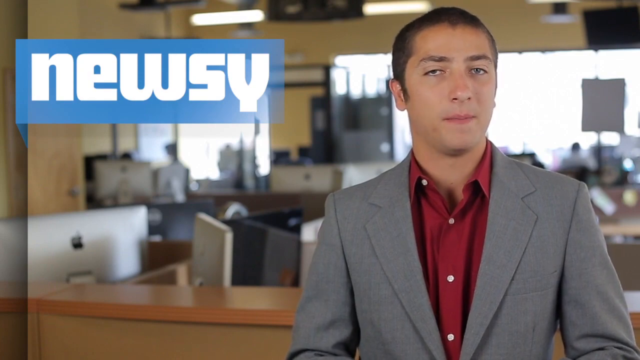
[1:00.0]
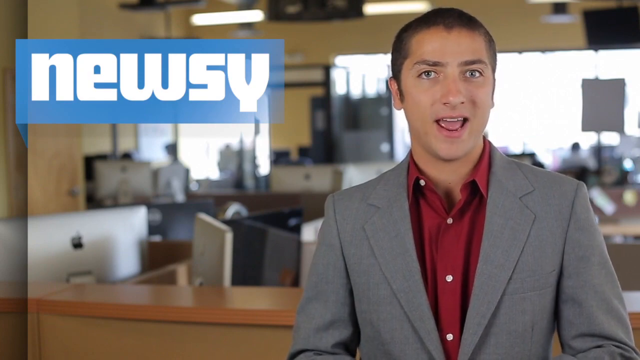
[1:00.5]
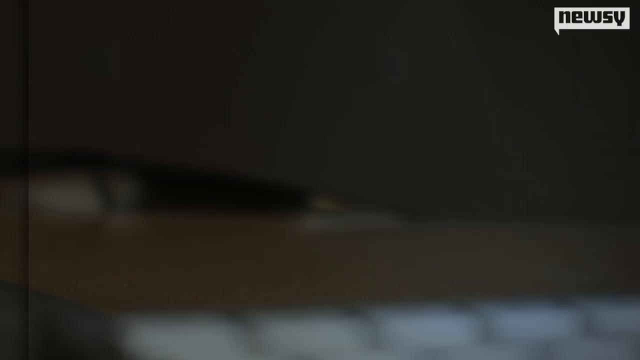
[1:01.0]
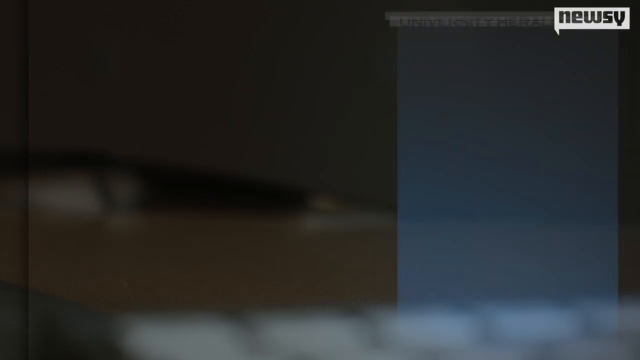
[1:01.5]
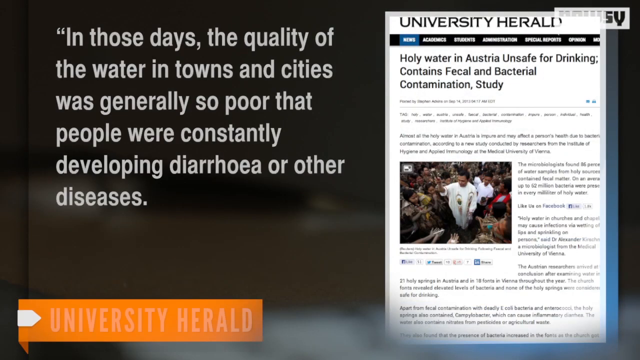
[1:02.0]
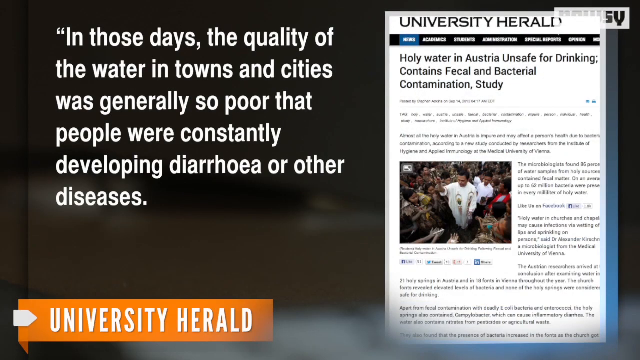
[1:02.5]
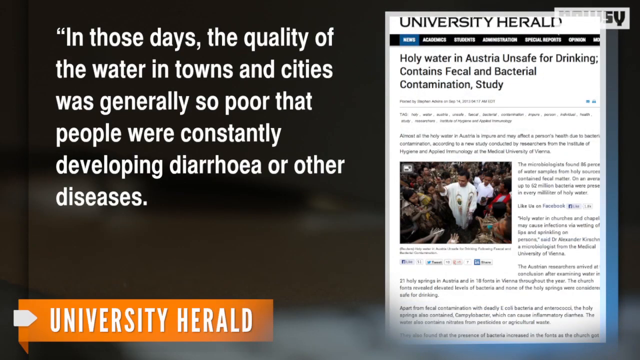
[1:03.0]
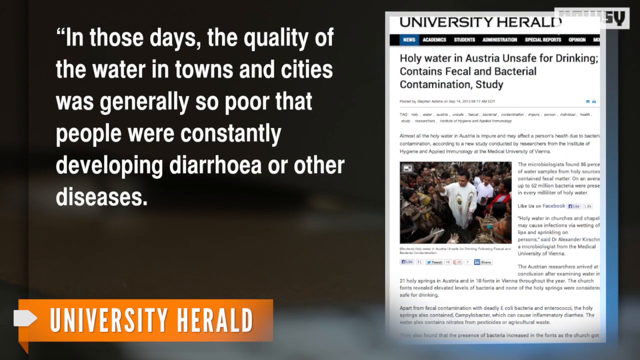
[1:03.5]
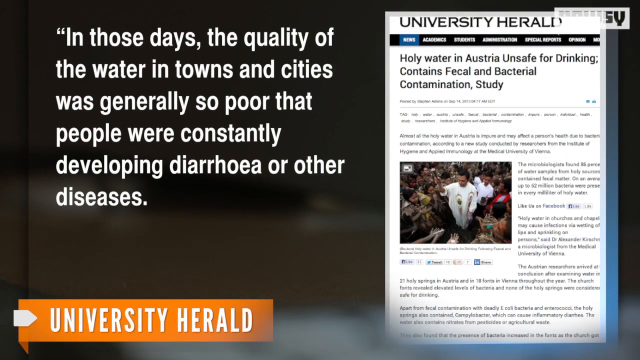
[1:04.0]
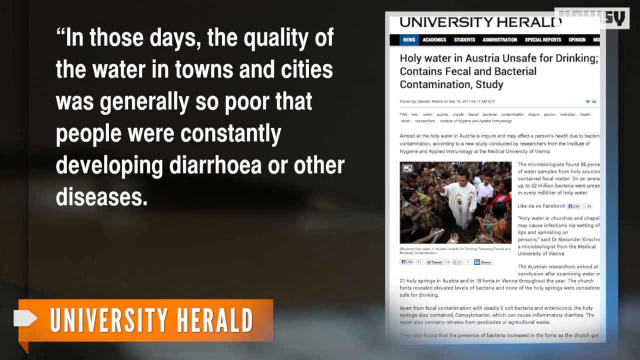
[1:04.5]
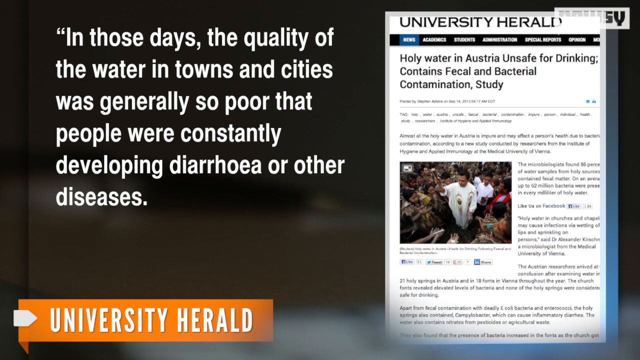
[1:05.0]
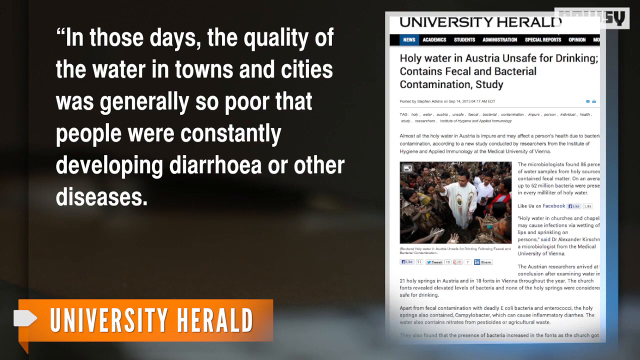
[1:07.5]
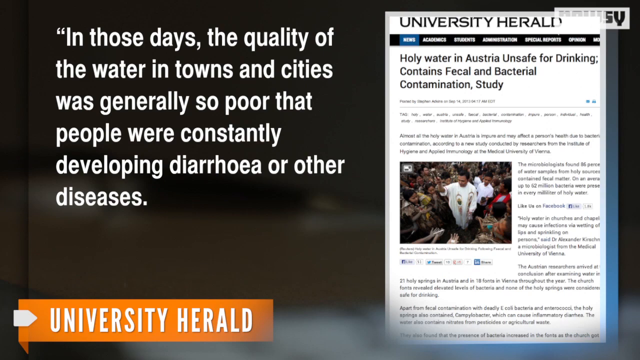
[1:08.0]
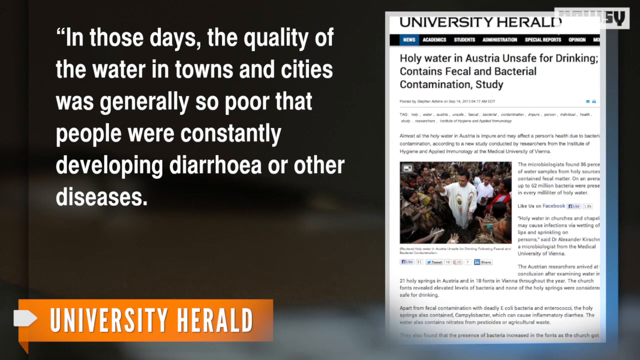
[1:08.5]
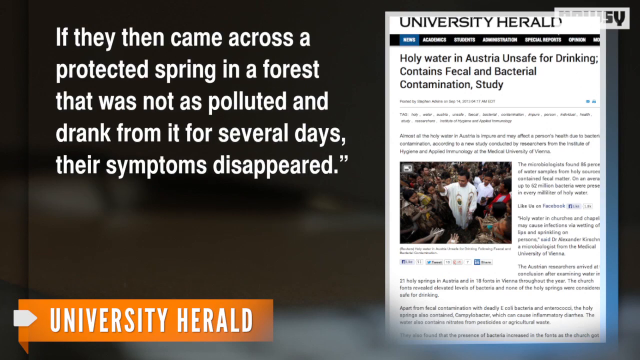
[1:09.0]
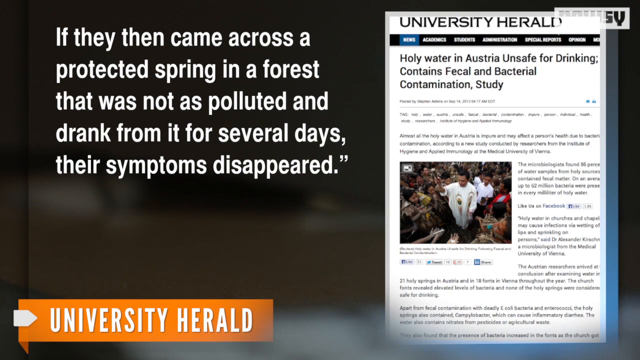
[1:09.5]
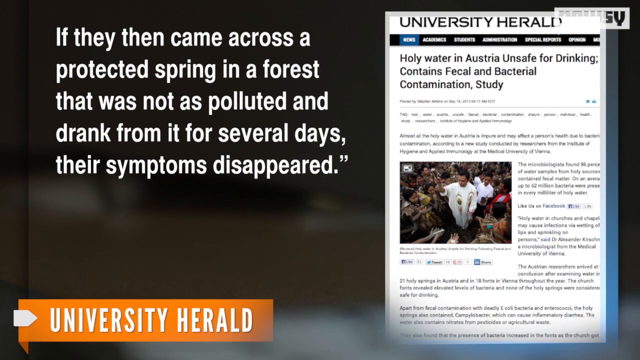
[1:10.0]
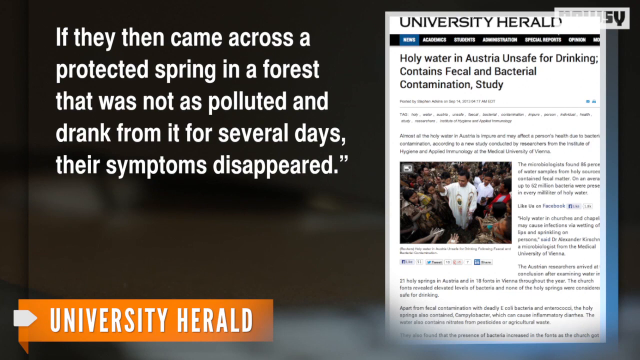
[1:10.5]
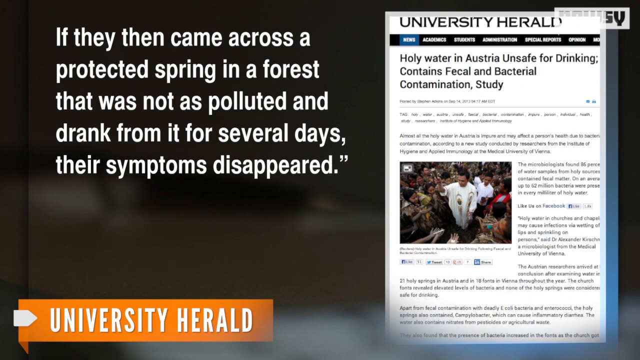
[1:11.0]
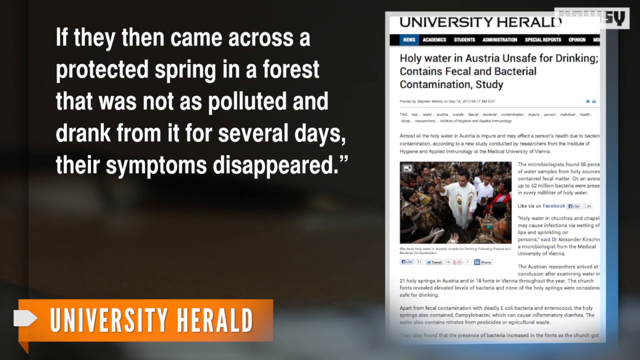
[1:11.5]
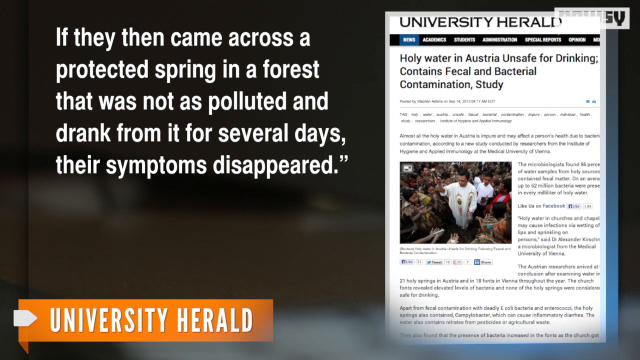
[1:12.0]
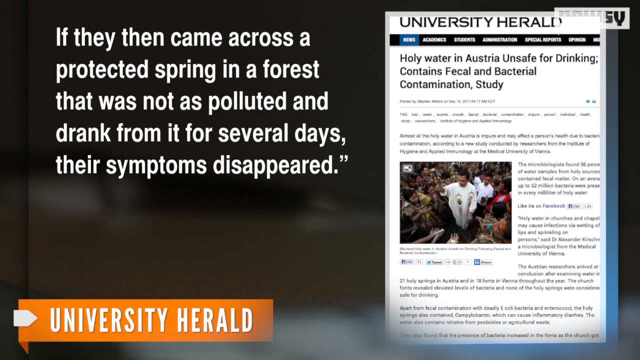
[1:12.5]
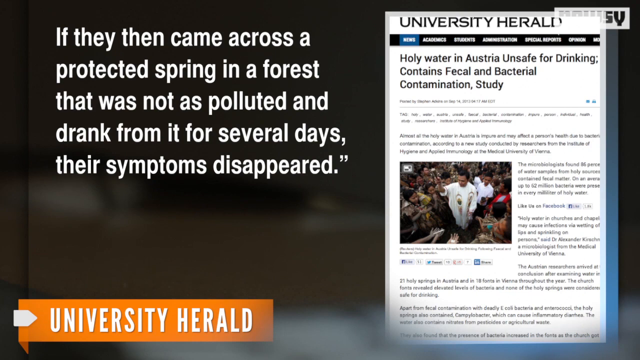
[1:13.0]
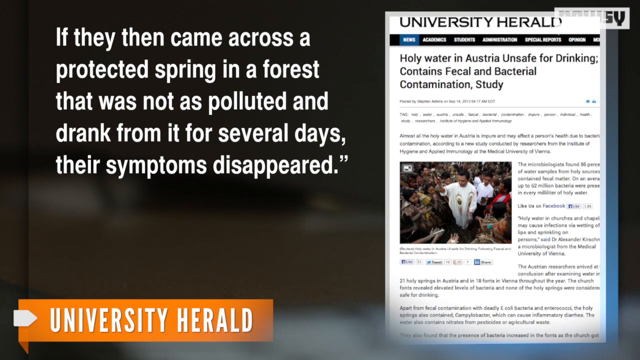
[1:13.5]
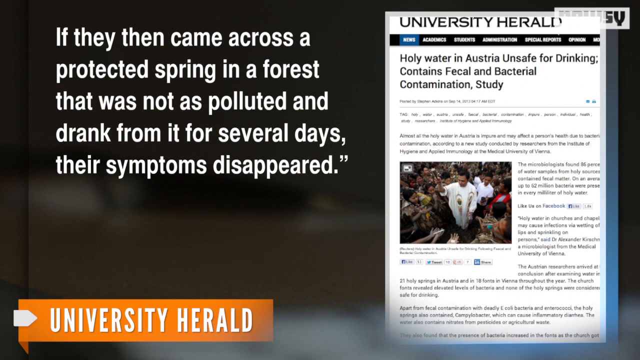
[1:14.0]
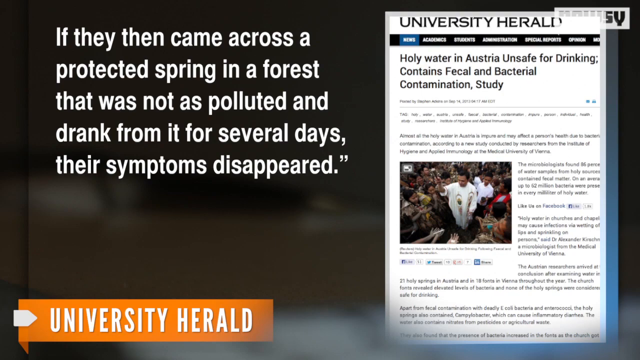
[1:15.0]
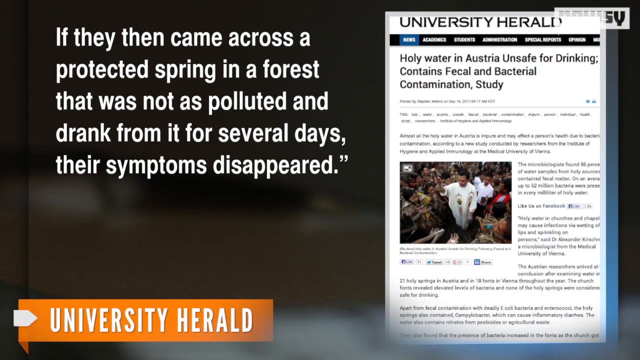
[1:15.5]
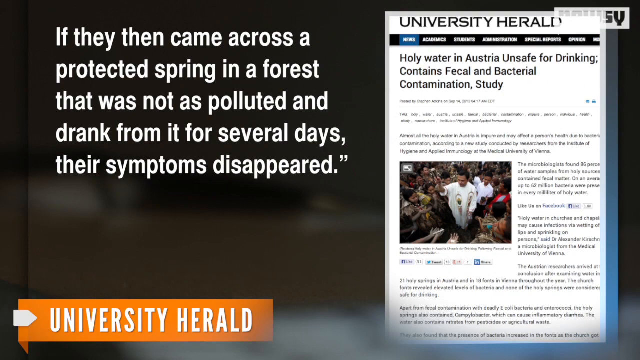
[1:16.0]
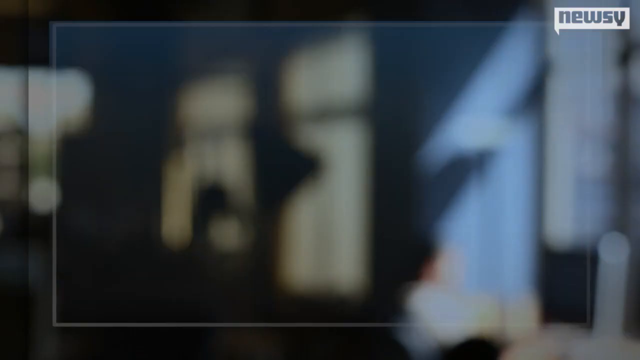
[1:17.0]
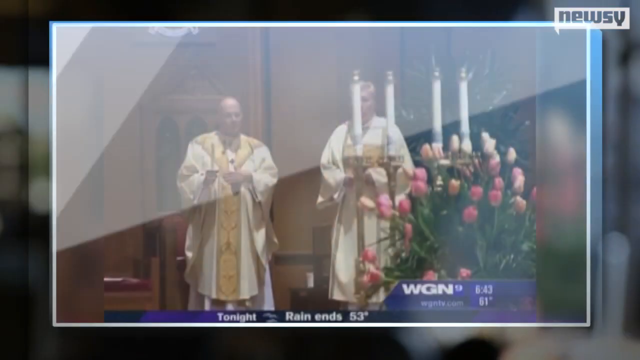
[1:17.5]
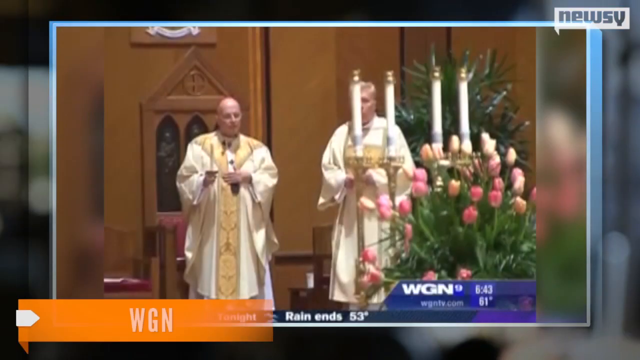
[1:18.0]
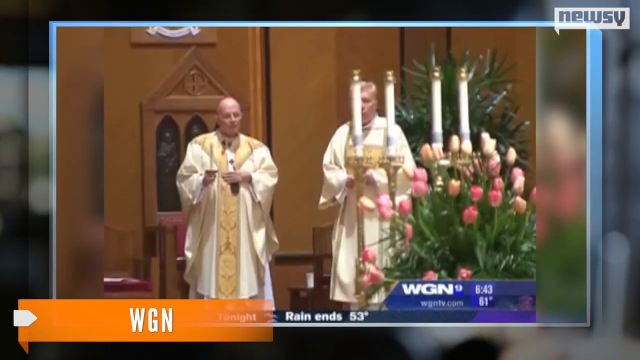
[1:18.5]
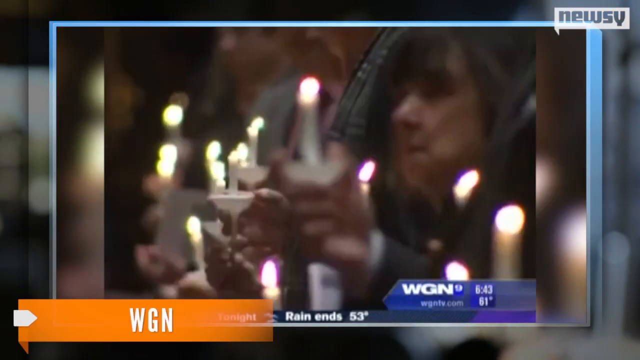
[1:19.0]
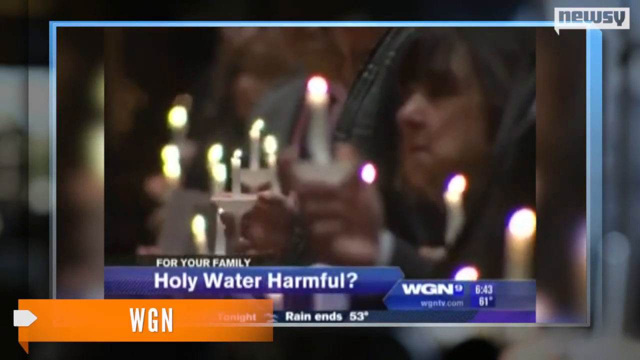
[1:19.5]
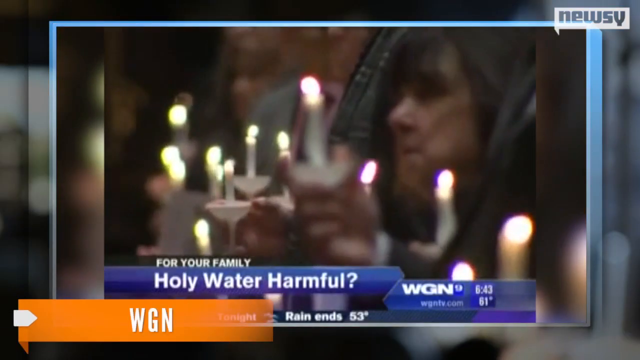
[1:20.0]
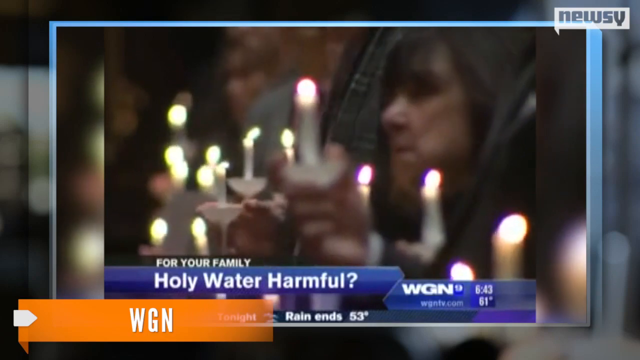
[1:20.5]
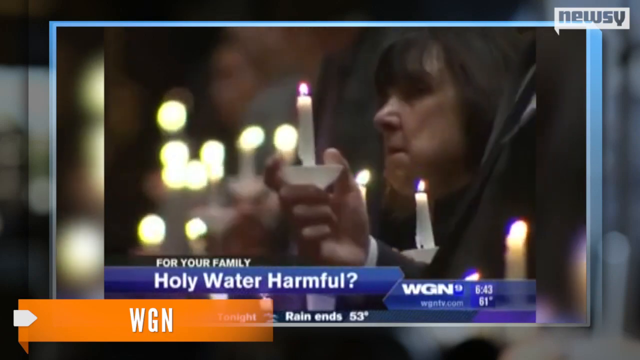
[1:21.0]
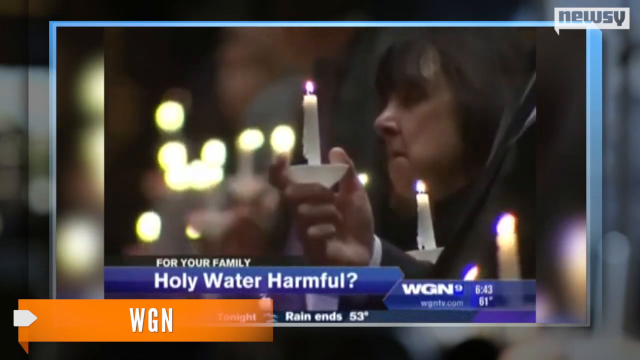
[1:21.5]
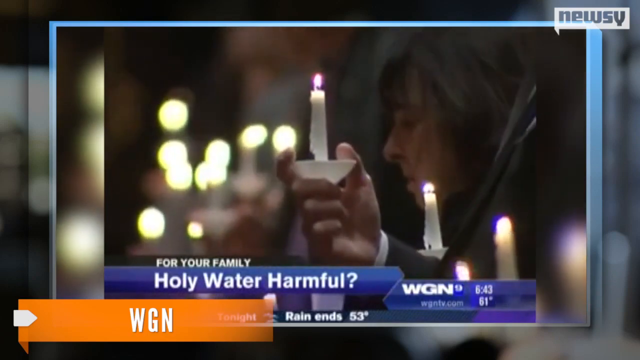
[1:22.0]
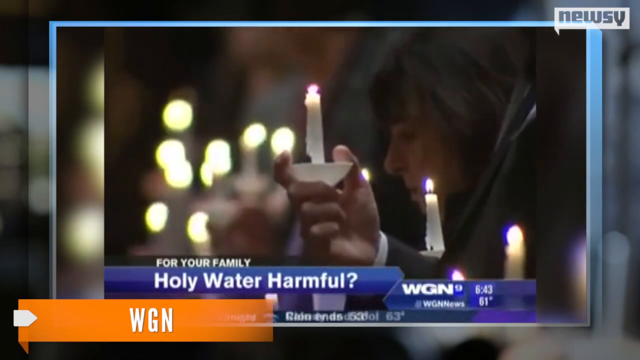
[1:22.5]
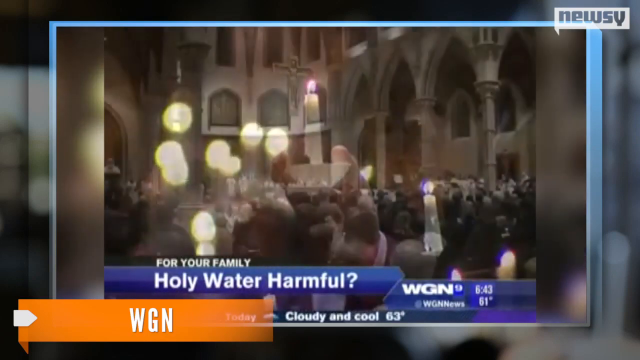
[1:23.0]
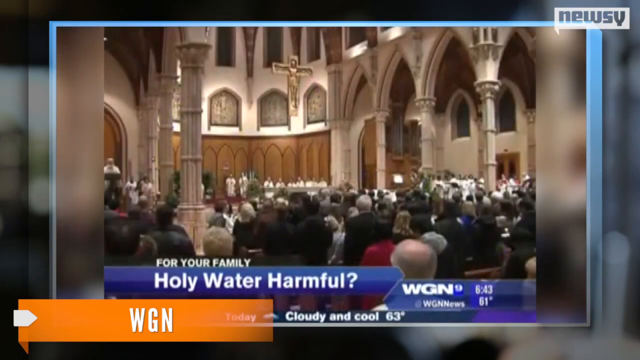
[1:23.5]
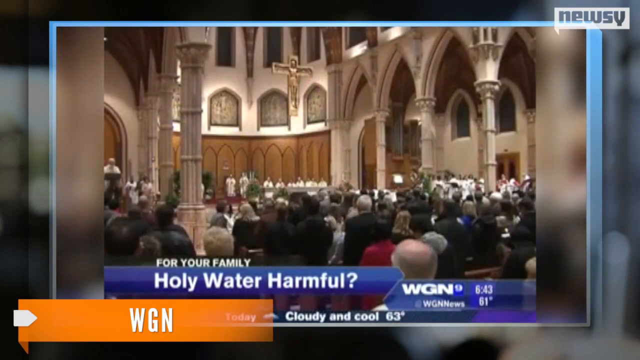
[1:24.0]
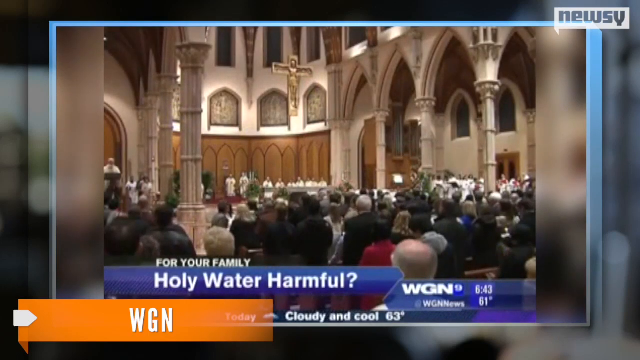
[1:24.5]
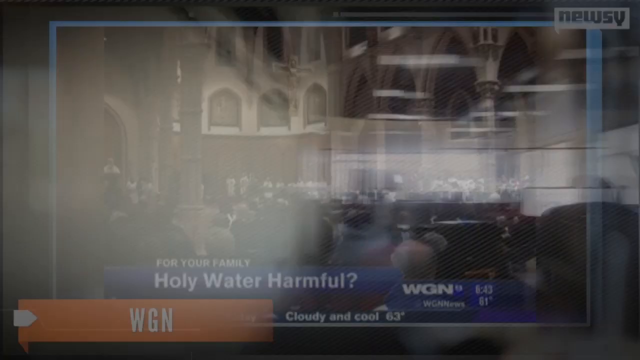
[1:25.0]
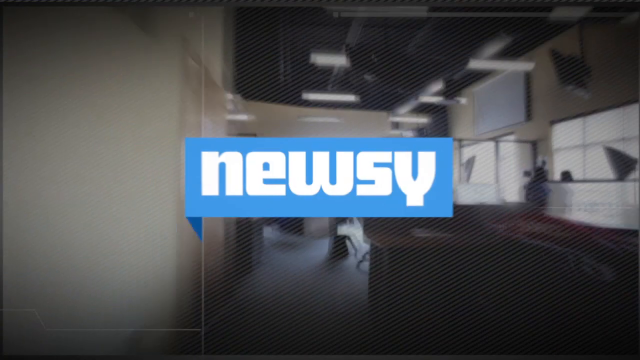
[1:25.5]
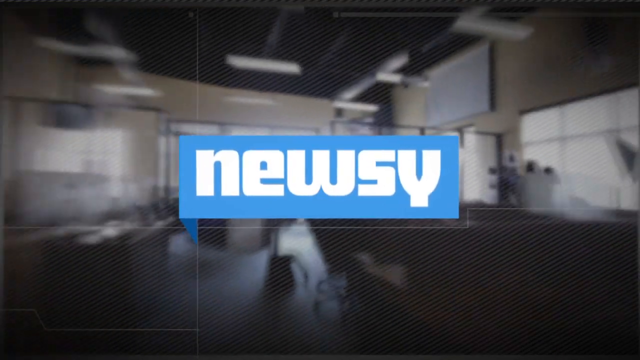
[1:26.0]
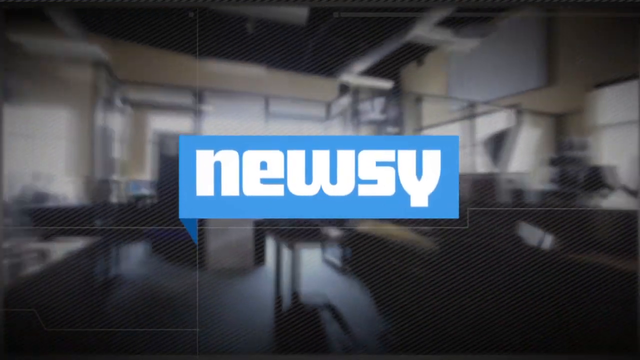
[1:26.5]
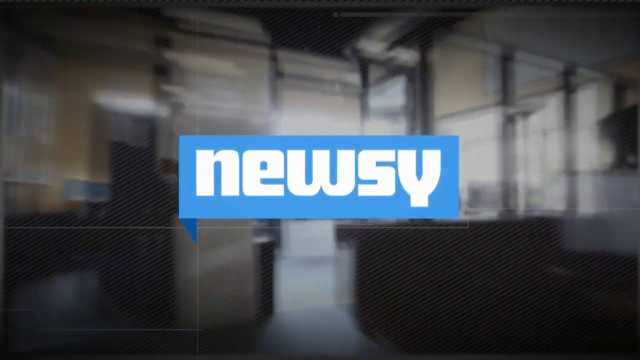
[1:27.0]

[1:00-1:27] The Newsy reporter, in a grey suit and red shirt with short brown hair, talks to the camera. An article from another site, University Herald, appears with the headline "Holy water in Austria unsafe for drinking contains fecal and bacterial contamination study." There is a zoom on the text, which then disappears. A short video from WGN follows with the topic "holy water harmful," then a short video of people praying in a church, and finally the outro of the Newsy program.